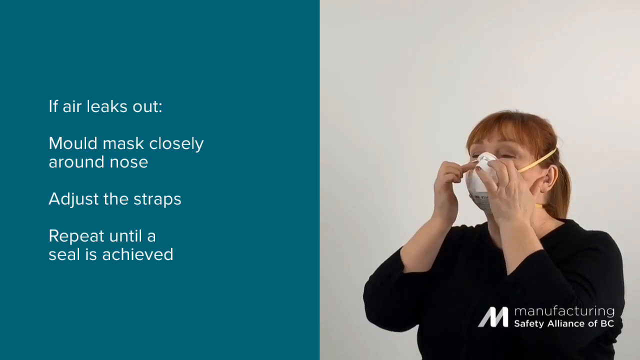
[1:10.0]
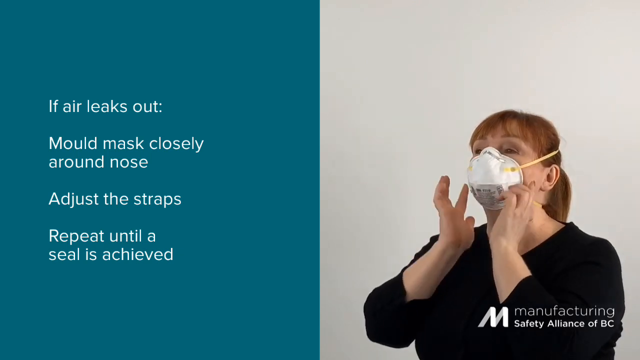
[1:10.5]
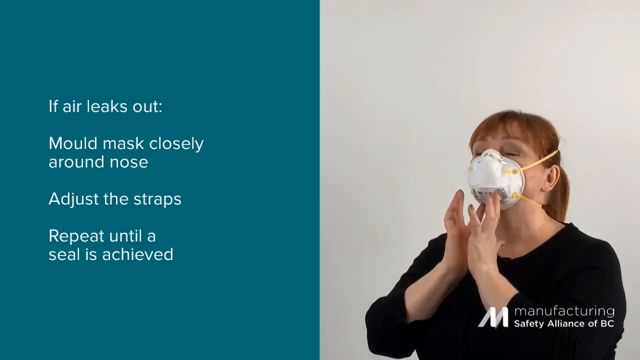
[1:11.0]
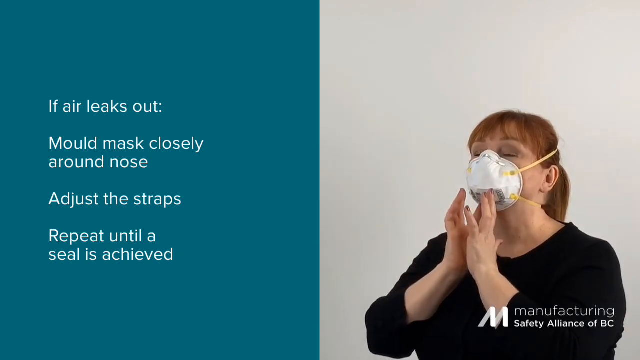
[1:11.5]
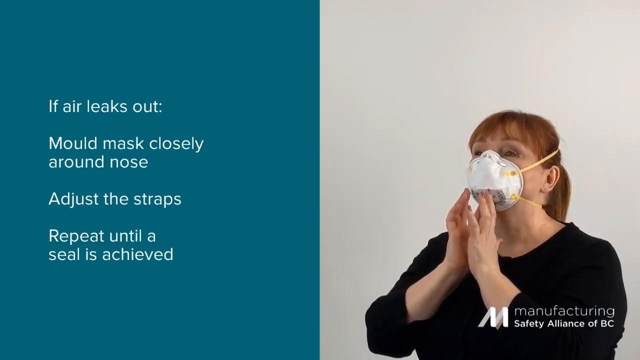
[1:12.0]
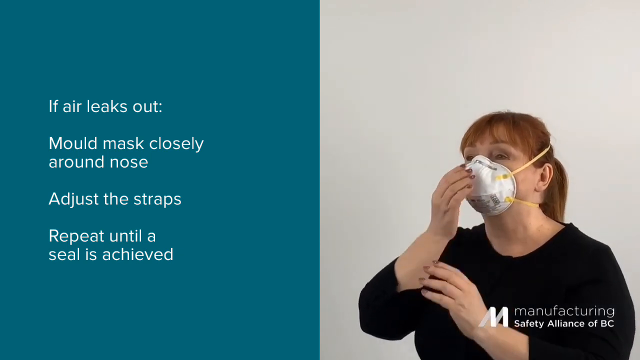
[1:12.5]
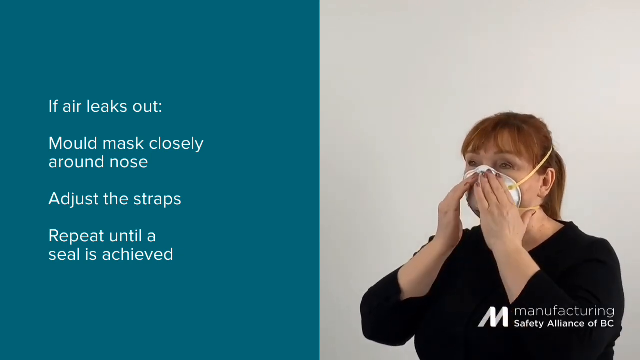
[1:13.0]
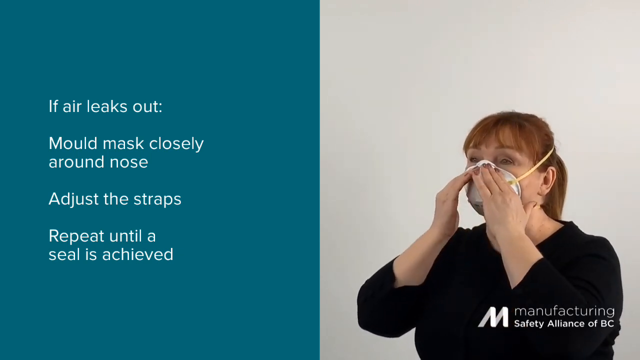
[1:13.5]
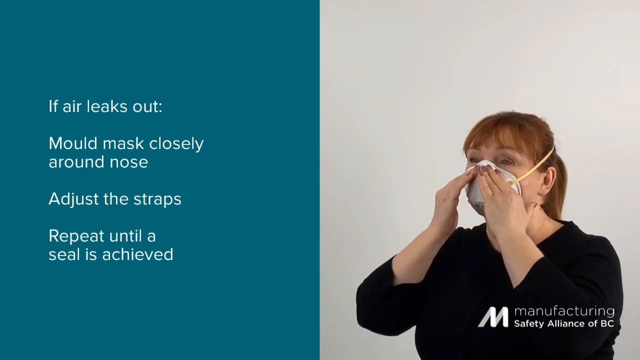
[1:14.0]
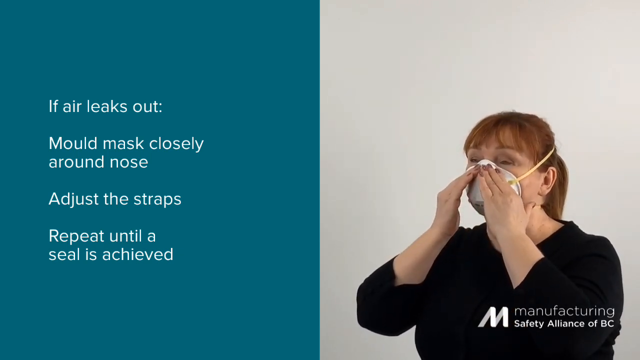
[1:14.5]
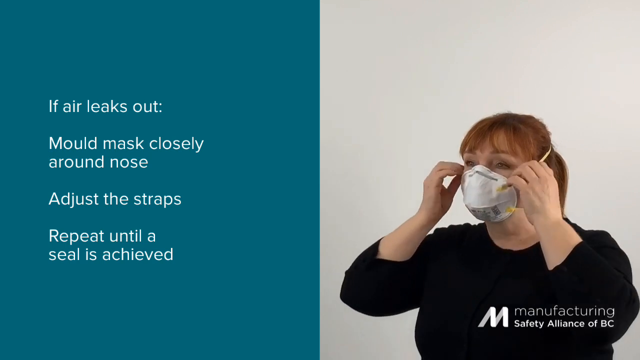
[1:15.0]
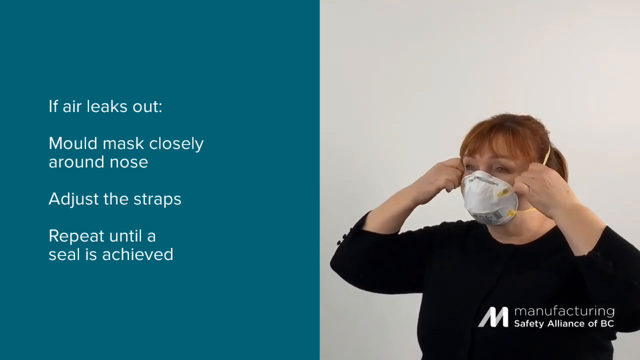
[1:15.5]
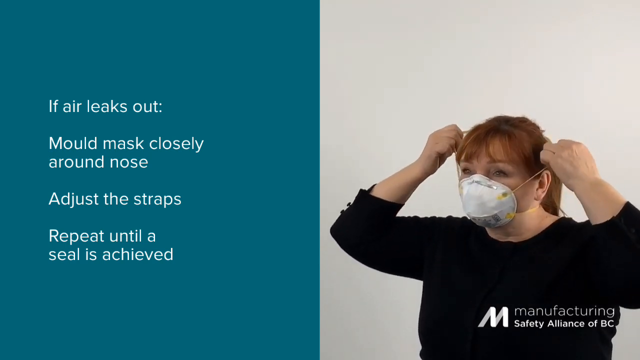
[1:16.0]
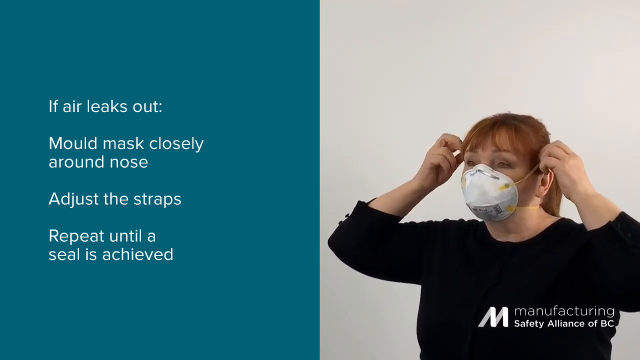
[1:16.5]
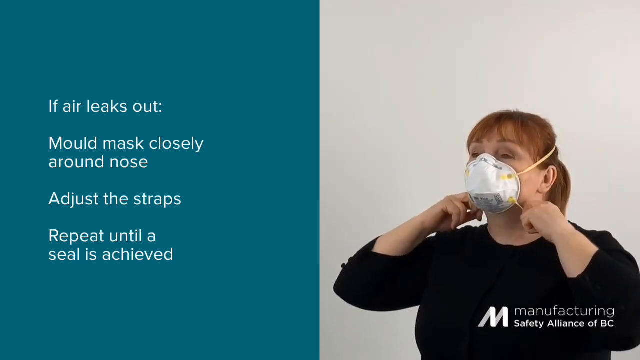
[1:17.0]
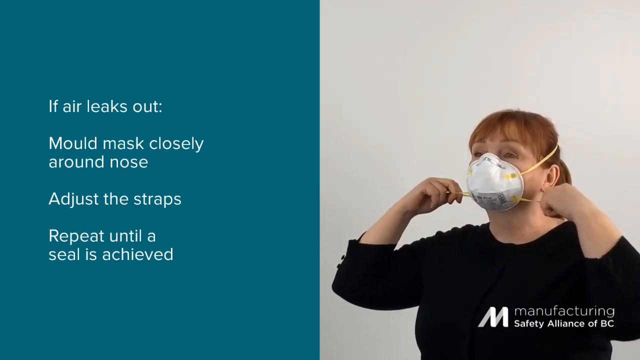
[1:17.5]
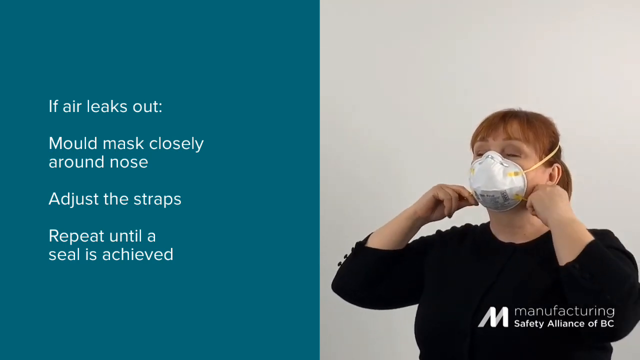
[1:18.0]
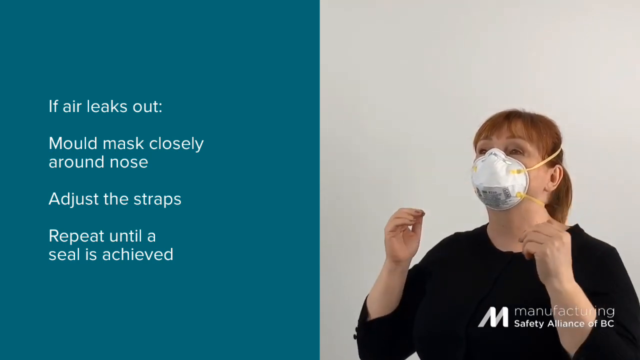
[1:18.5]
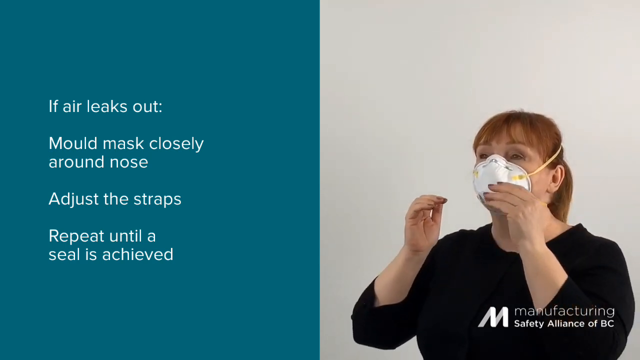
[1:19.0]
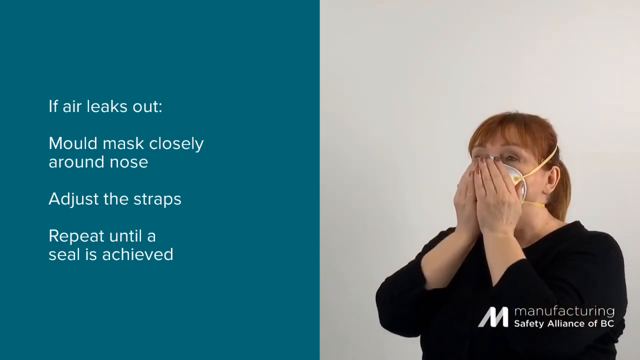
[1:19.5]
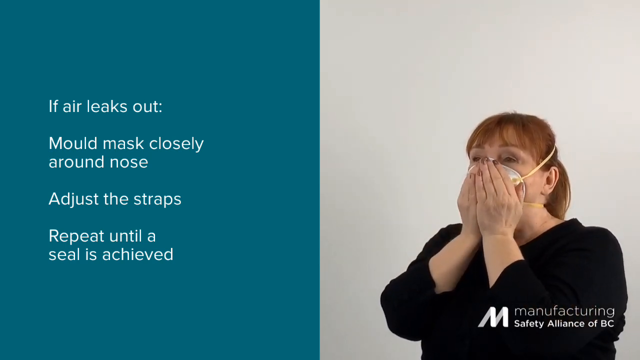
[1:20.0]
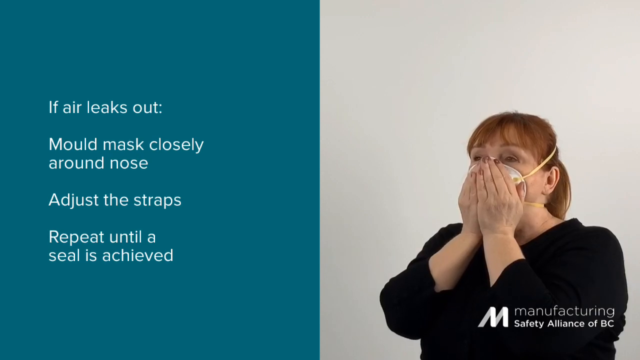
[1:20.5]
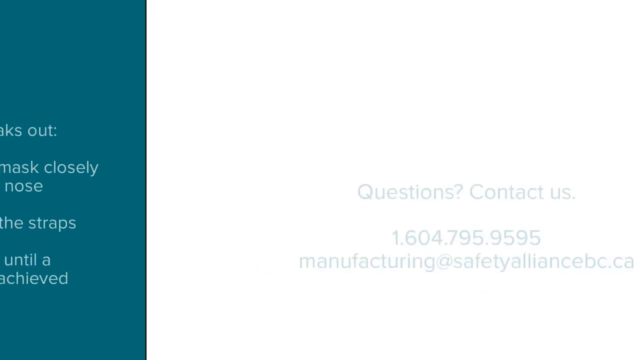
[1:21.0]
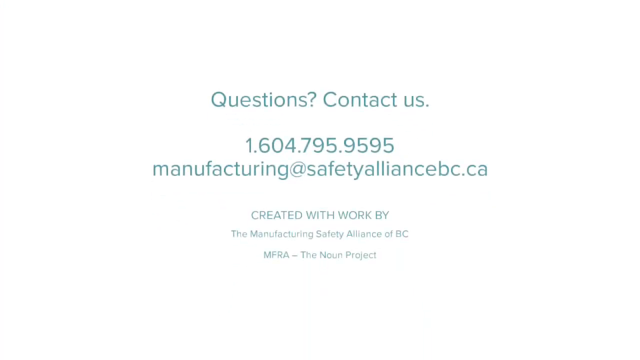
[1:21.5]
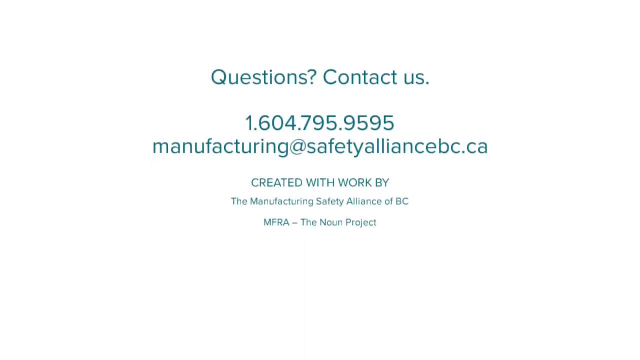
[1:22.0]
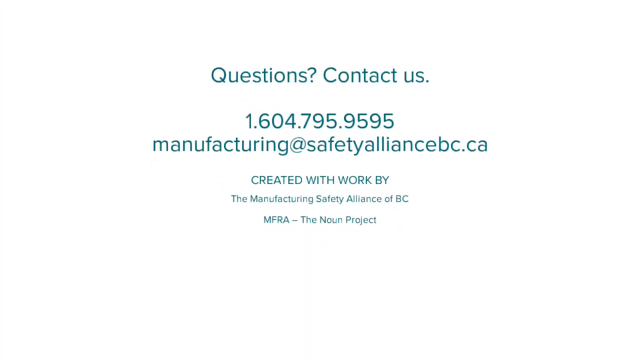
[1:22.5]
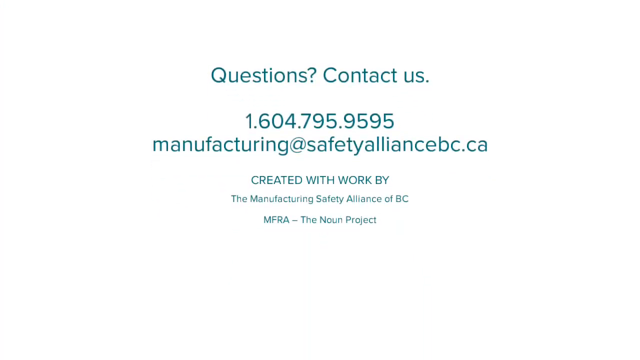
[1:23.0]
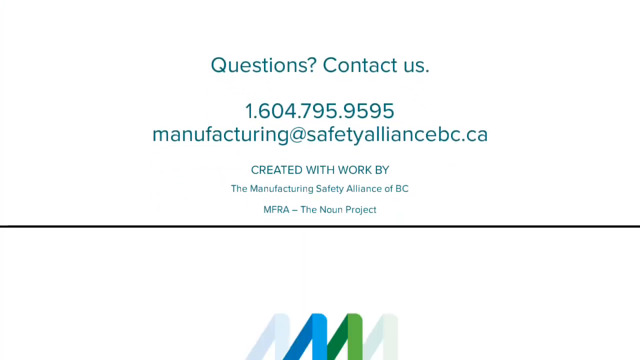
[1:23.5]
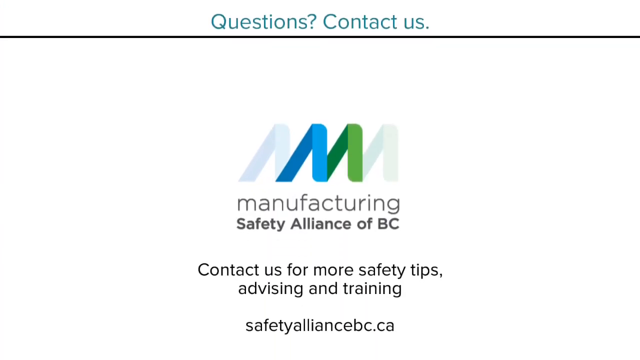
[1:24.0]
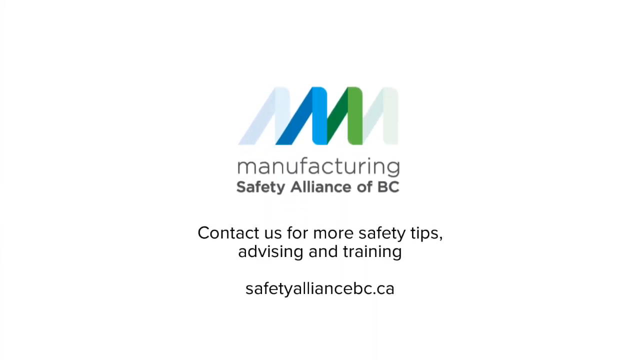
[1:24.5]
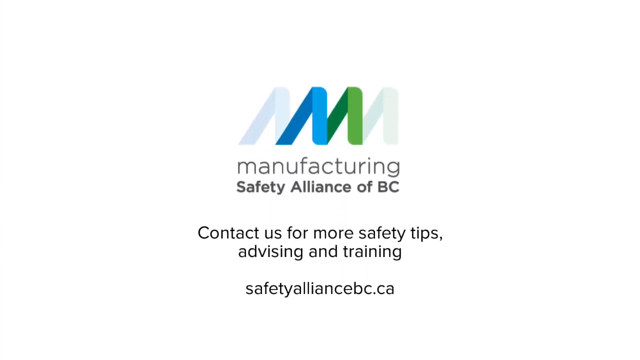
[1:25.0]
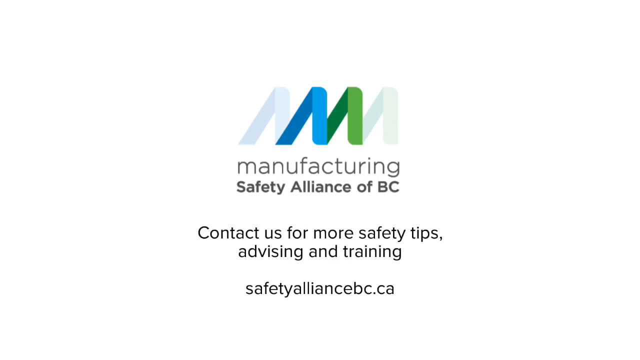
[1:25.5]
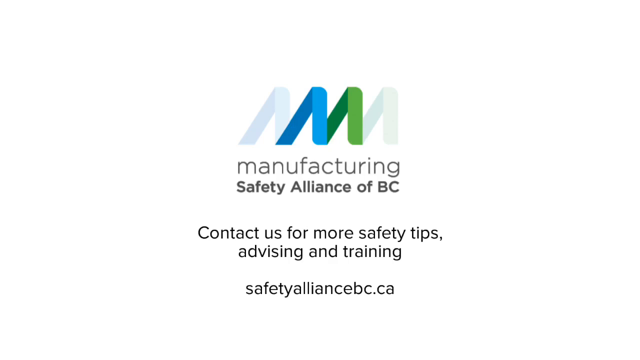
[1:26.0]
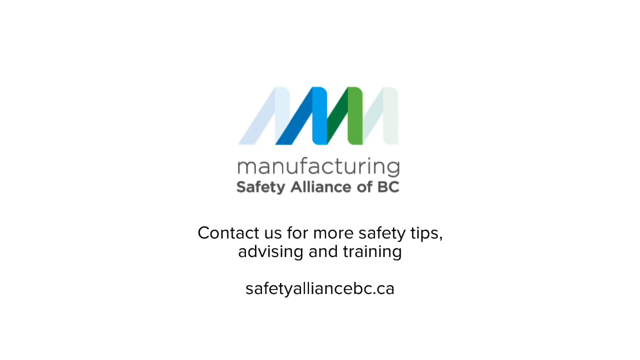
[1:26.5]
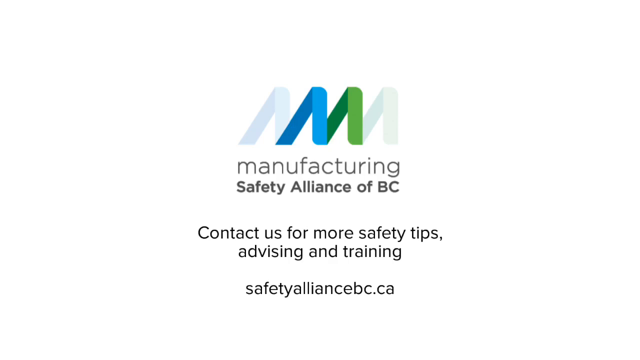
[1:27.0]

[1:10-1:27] The positive pressure test of the N95 mask continues. The female instructor holds a hand on each side of the nose-clip area, each hand below an eye on the left and right sides of her nose. Text on the left reads "If air leaks out. Mold mask closely around nose. Adjust the straps. Repeat until a seal is achieved." On the right side of the split screen, she adjusts the straps, giving the mask a slight tug and pulling it a little tighter against her face, then covers the front of the N95 mask with both hands again. The video changes to a white background with the text "Questions? Contact us 1-604-795-9595 manufacturing@safetyalliancebc.ca Created with work by the Manufacturing Safety Alliance of BC MFRA-The Noun Project." A further screen shows a blue, green and white corkscrew-design manufacturing logo with lowercase text directly below it reading "manufacturing," followed by "Safety Alliance of BC, Contact us for more safety tips, advising, and training. safetyalliancebc.ca."